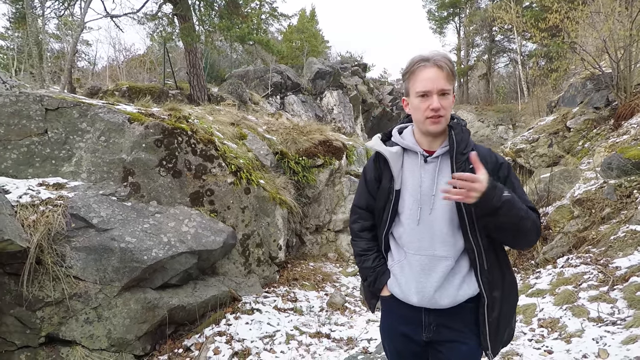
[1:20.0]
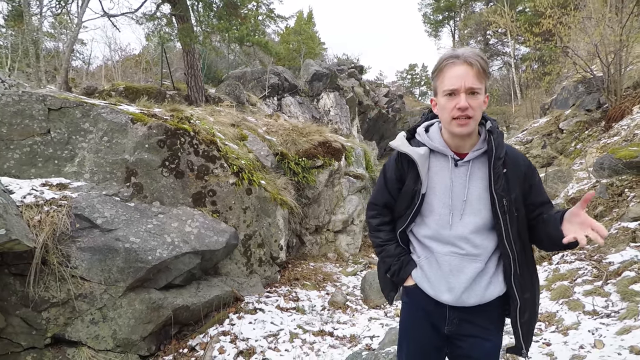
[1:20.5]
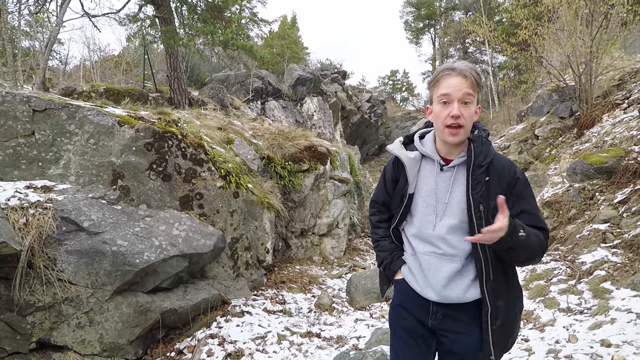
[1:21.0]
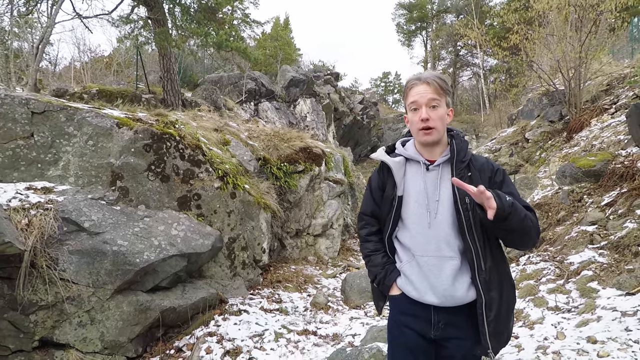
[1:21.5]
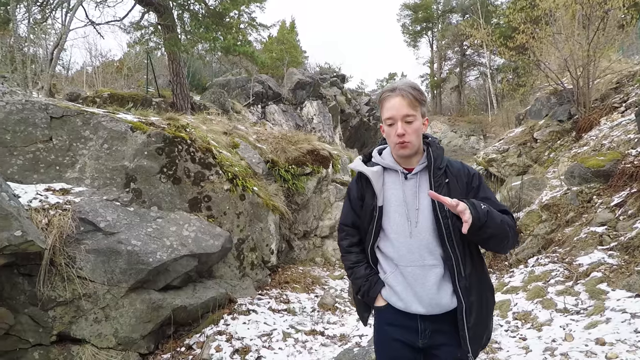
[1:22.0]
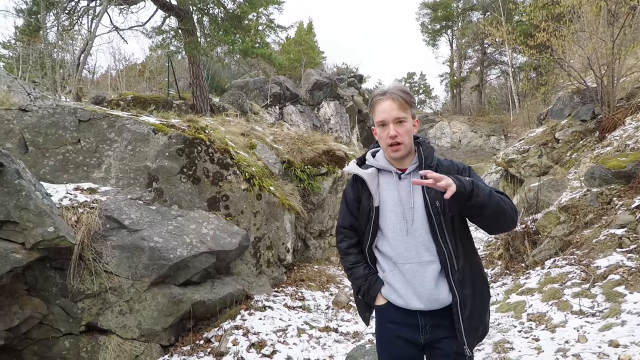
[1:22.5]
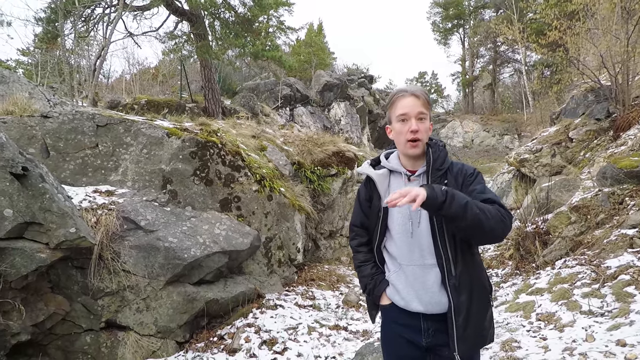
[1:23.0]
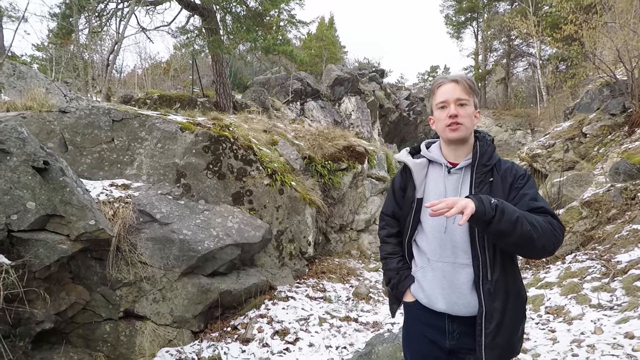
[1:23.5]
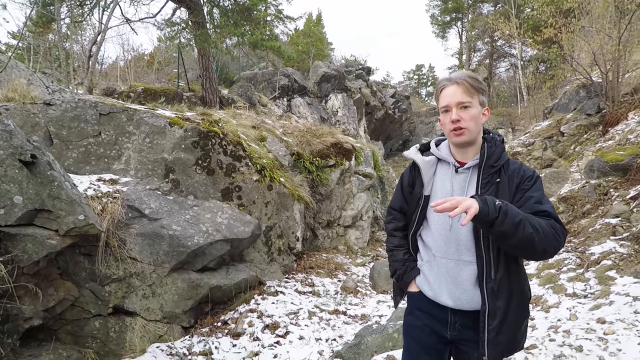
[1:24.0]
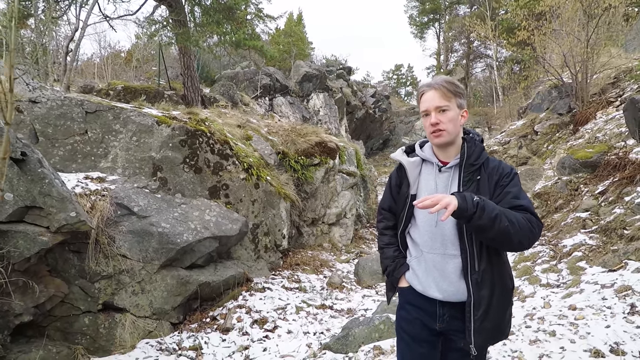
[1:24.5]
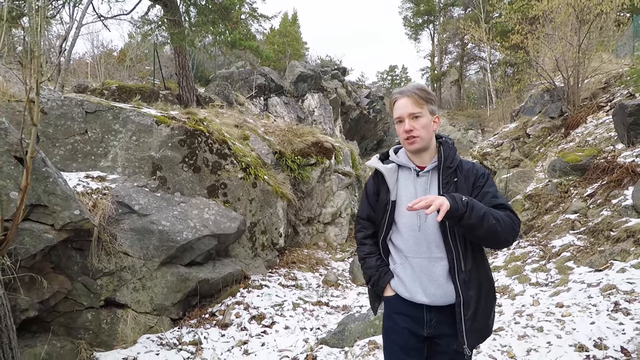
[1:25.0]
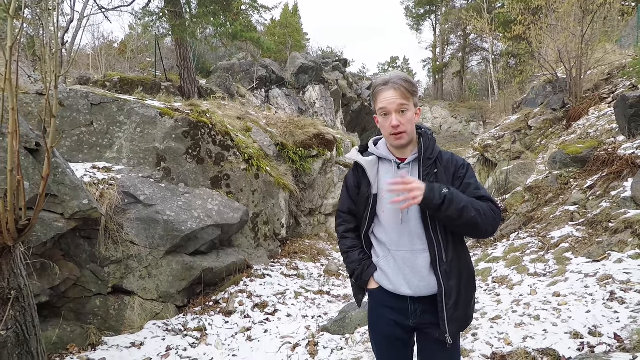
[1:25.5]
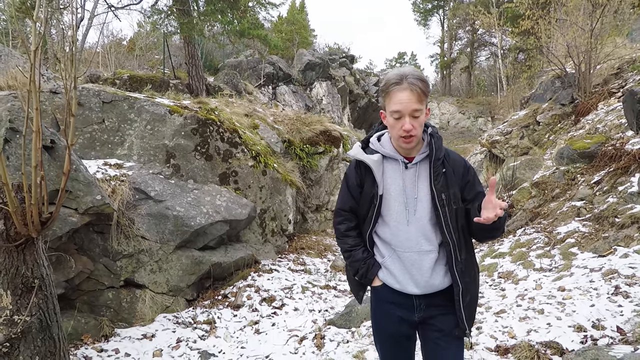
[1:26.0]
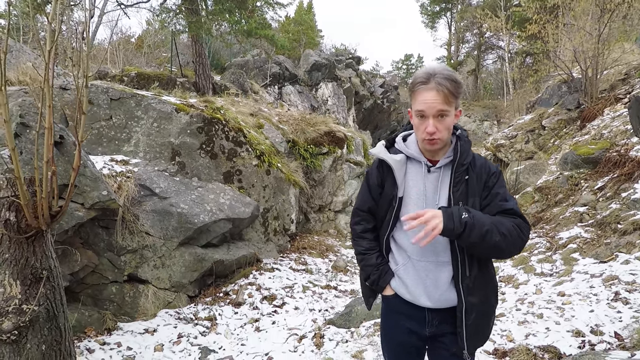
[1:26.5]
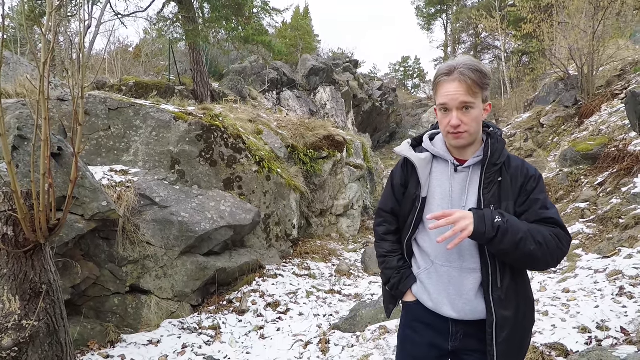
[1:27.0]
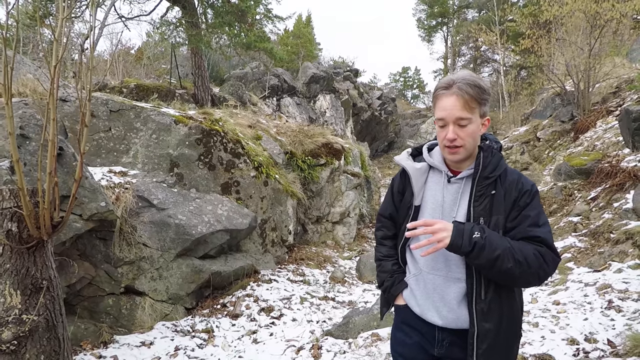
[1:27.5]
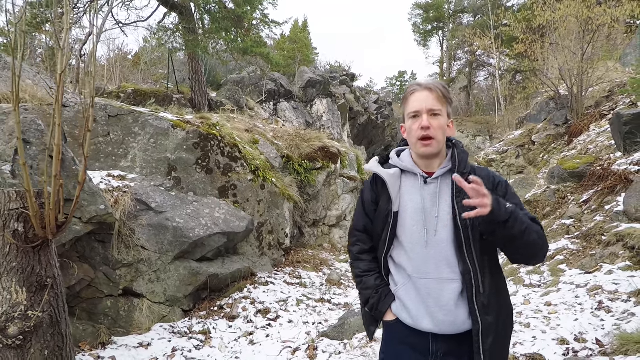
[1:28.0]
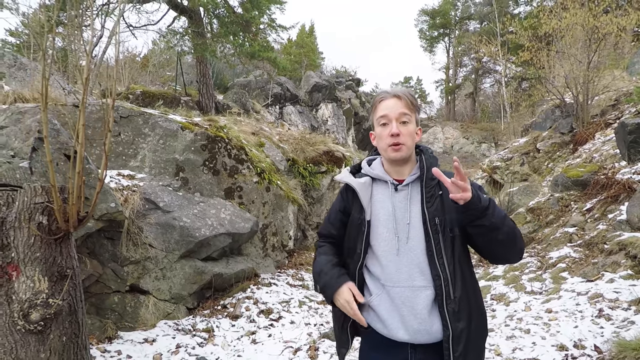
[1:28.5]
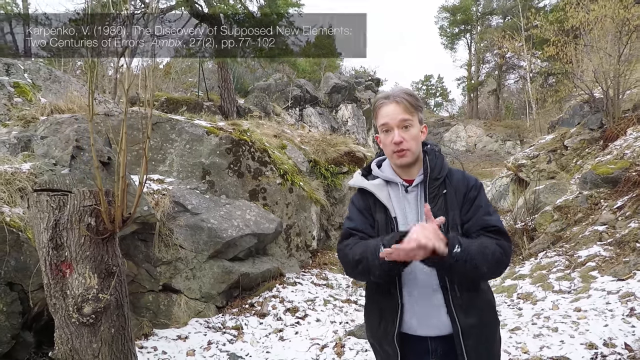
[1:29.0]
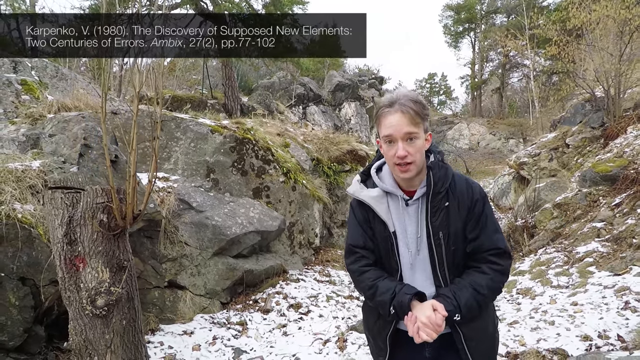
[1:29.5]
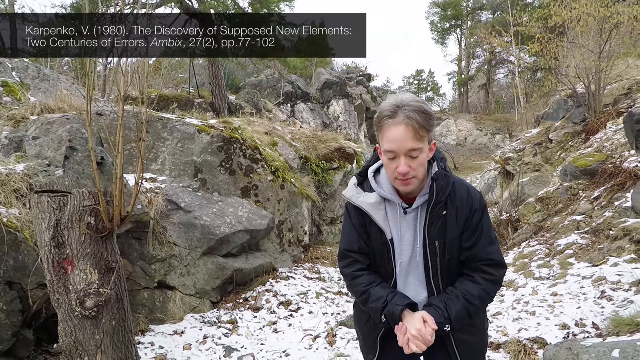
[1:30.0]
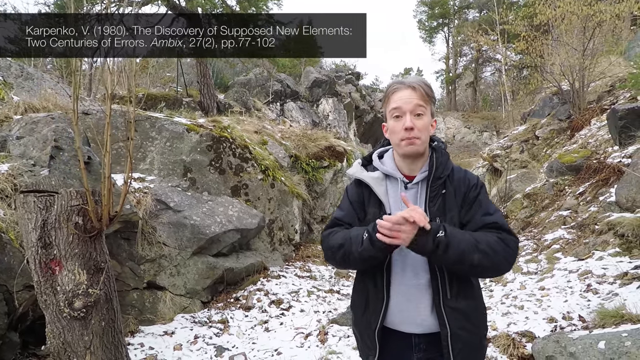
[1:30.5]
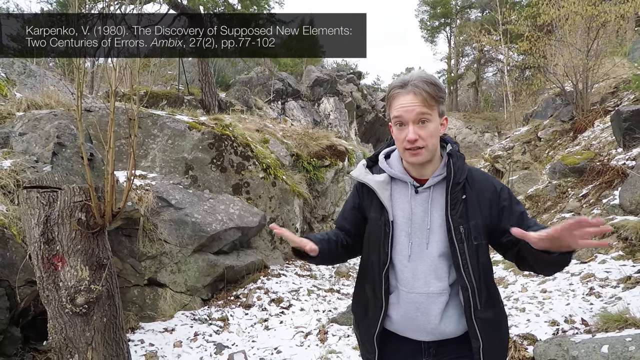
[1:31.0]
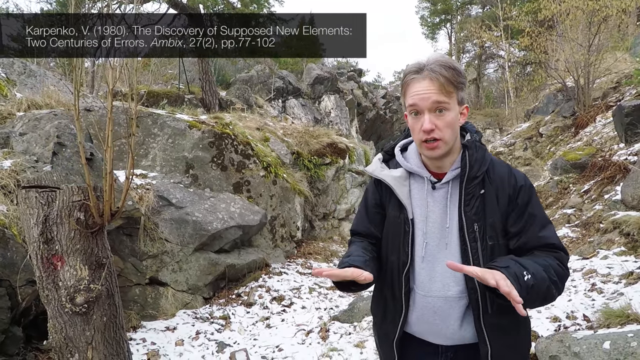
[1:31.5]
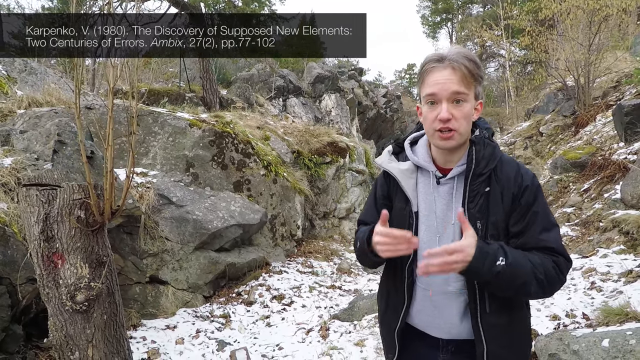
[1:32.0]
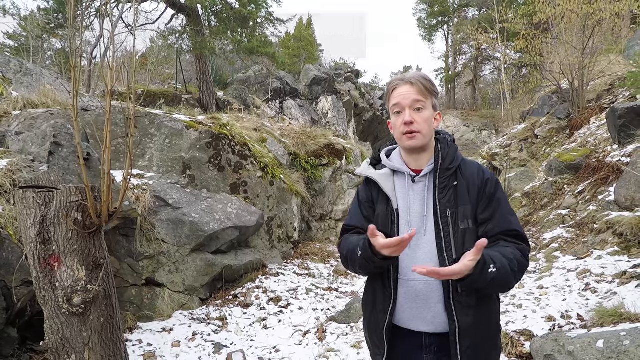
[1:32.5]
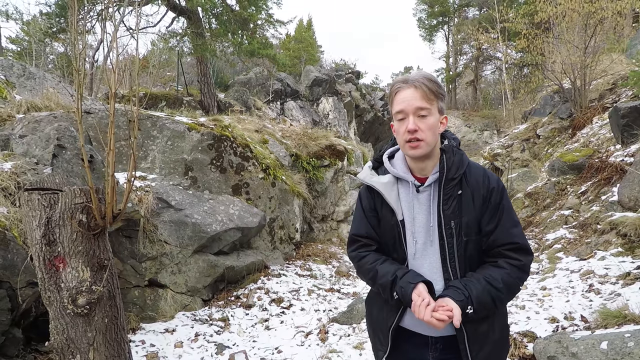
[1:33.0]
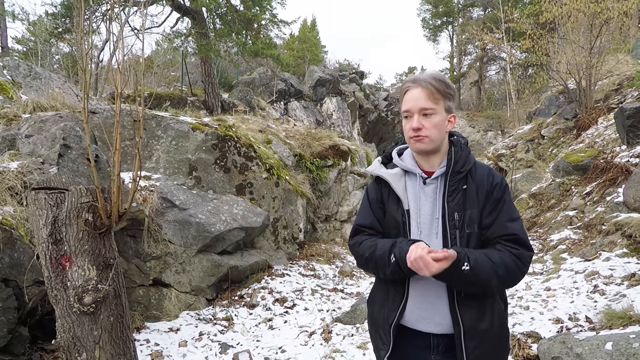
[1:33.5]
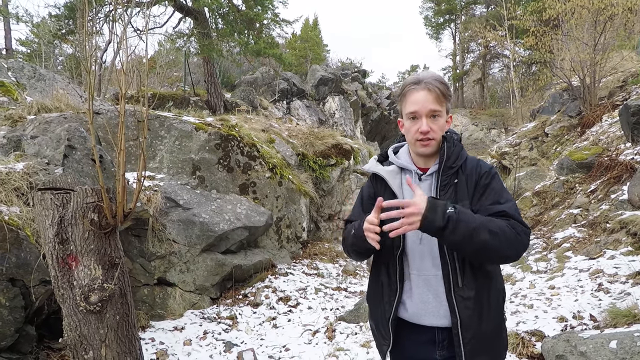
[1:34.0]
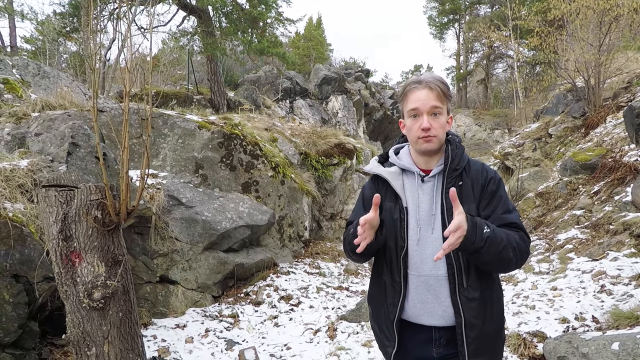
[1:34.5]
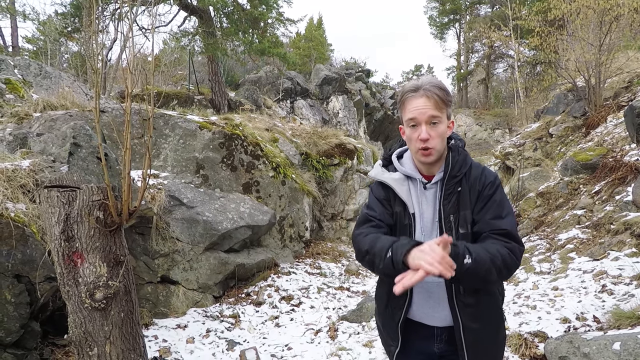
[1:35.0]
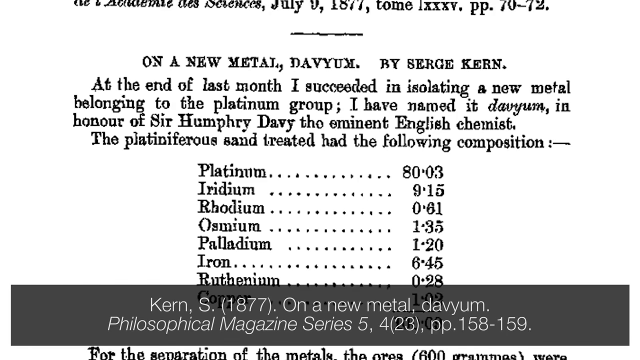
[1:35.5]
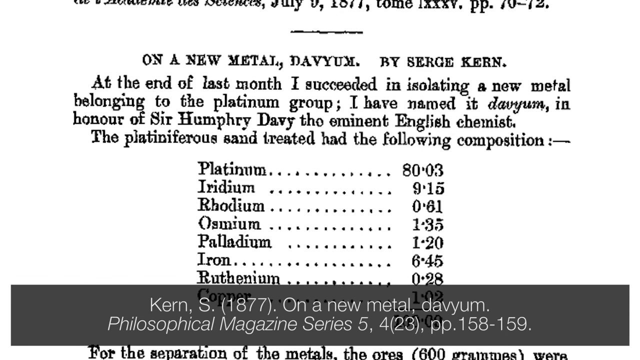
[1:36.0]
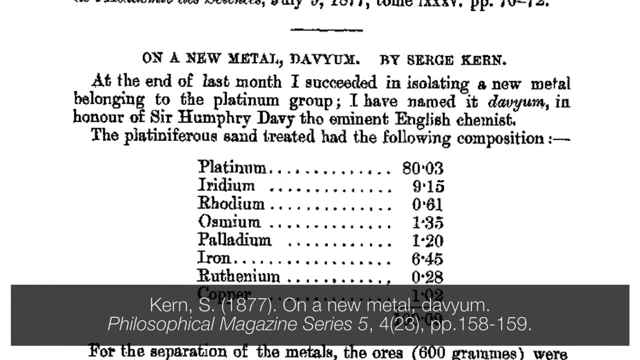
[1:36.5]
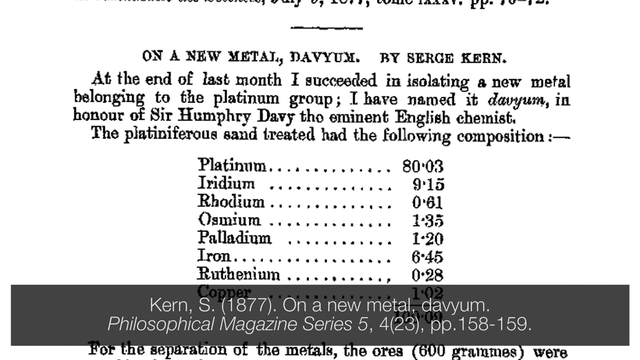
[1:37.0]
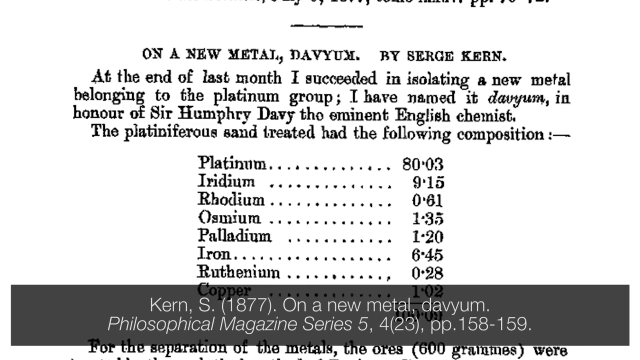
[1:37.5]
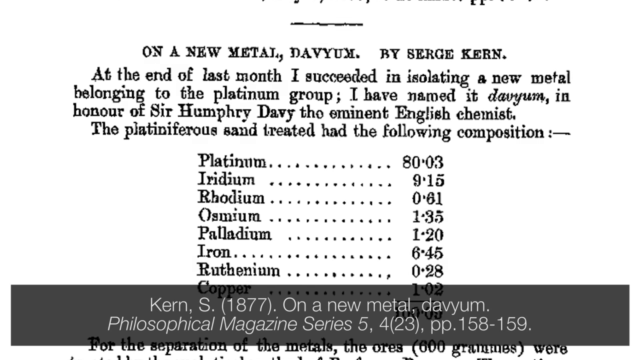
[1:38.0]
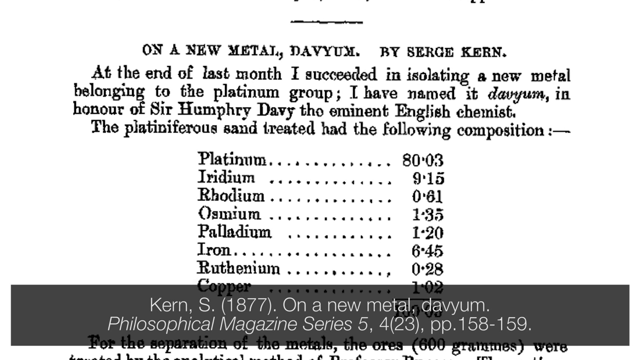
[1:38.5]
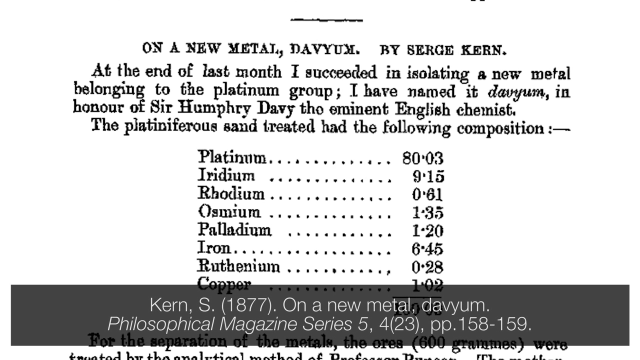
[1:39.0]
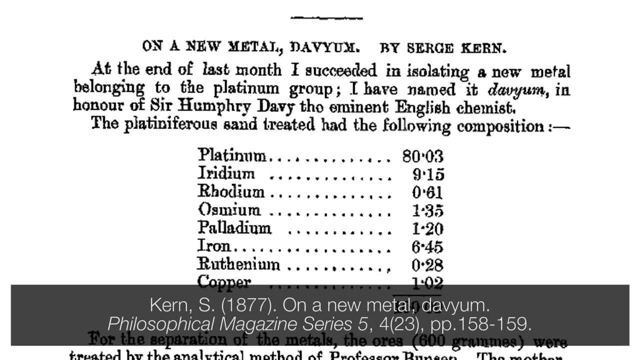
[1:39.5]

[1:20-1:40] The video is about One Town, Four Elements, the town of Utterby. A man wearing a gray hoodie with a navy jacket over it walks while talking, with lots of trees and rocks in the background and no people around. He makes many expressive hand gestures, making fists and clapping them together. He looks very pale. On-screen text says something about a new type of metal.